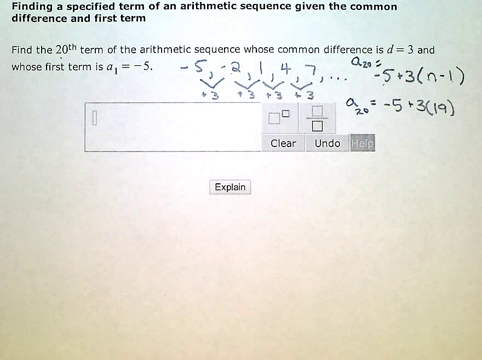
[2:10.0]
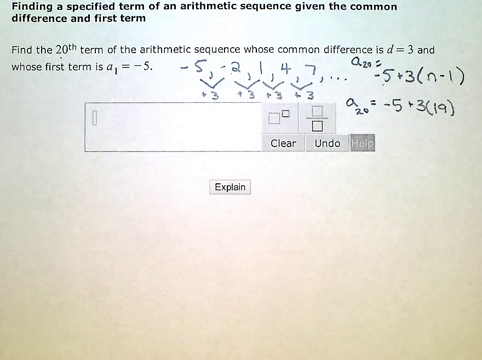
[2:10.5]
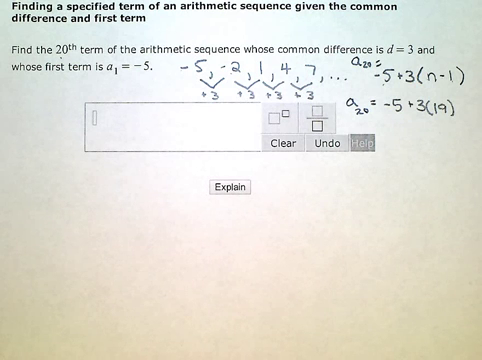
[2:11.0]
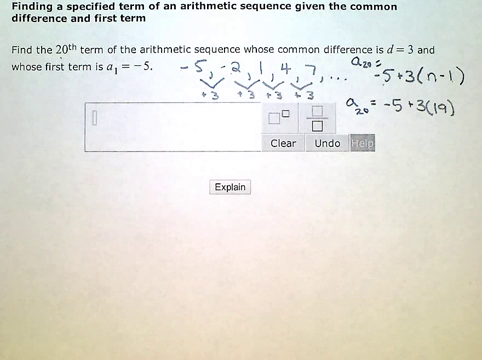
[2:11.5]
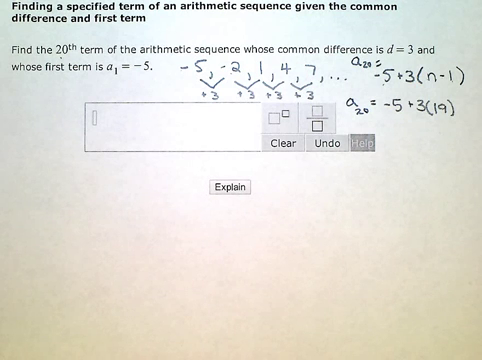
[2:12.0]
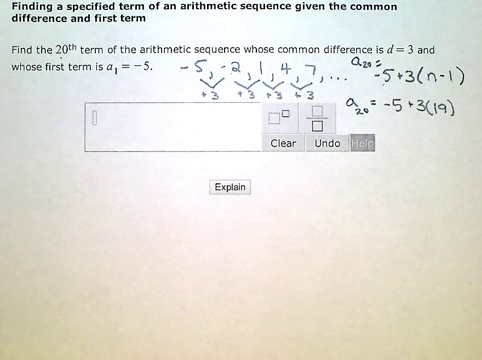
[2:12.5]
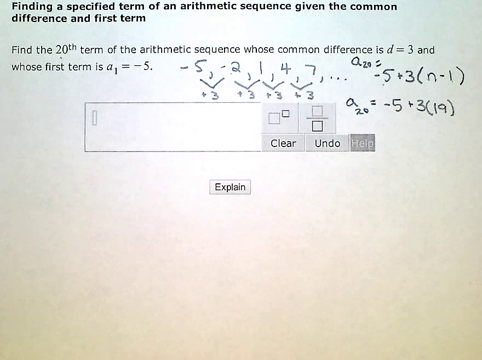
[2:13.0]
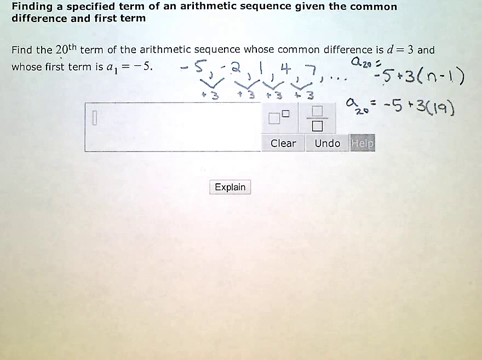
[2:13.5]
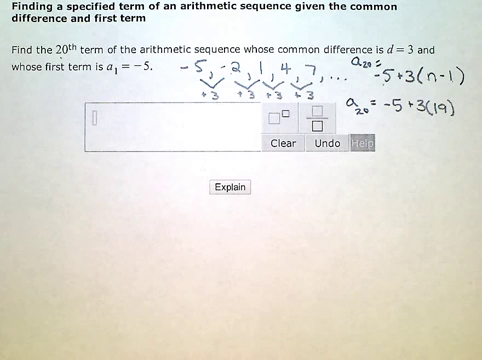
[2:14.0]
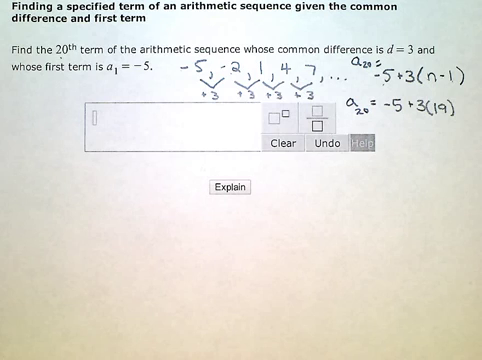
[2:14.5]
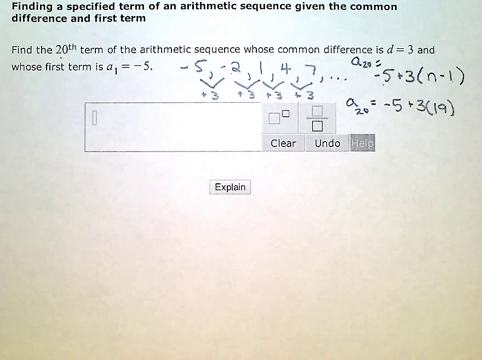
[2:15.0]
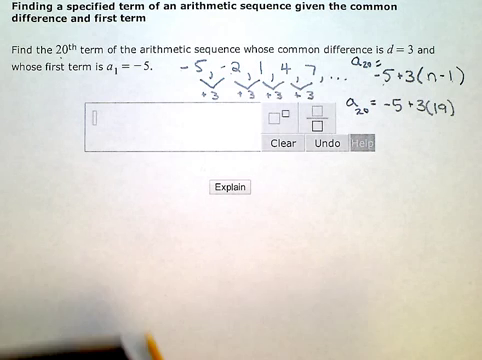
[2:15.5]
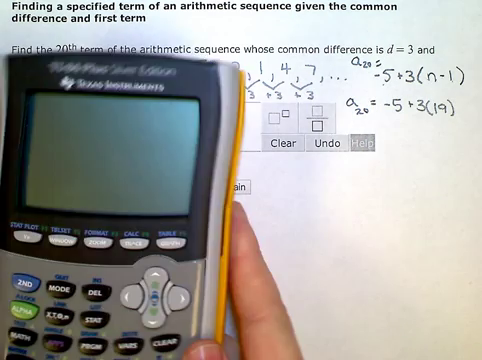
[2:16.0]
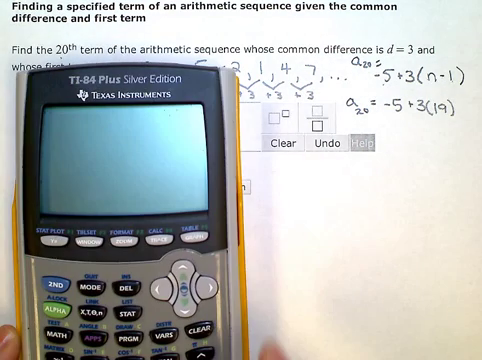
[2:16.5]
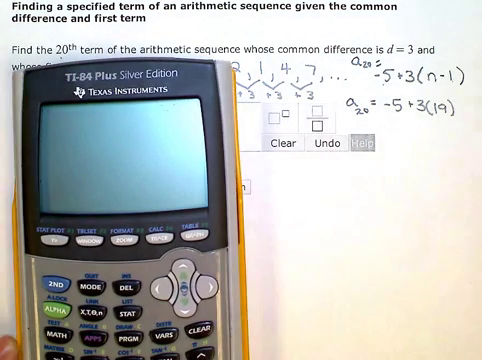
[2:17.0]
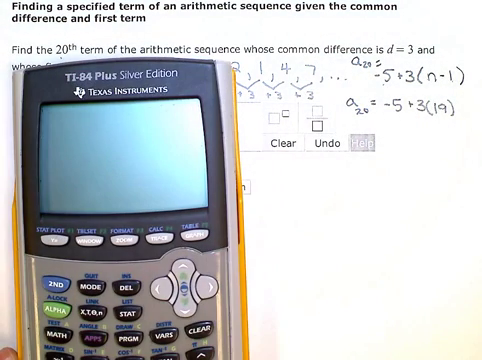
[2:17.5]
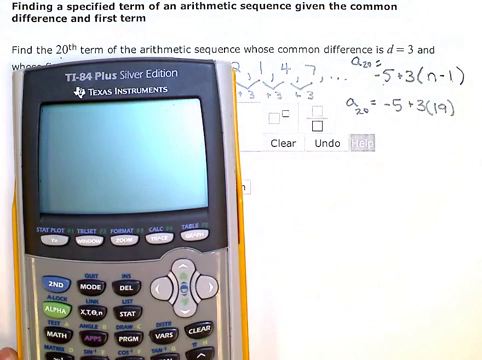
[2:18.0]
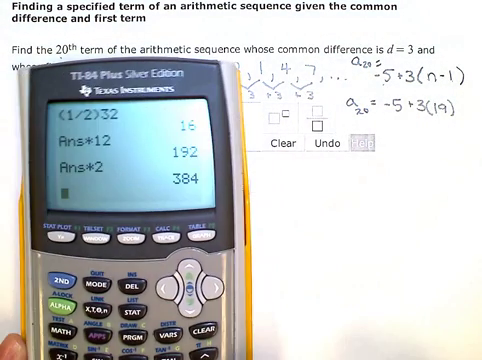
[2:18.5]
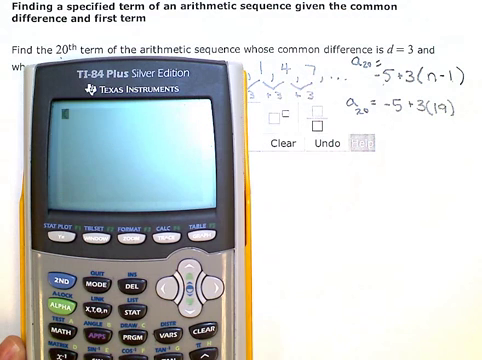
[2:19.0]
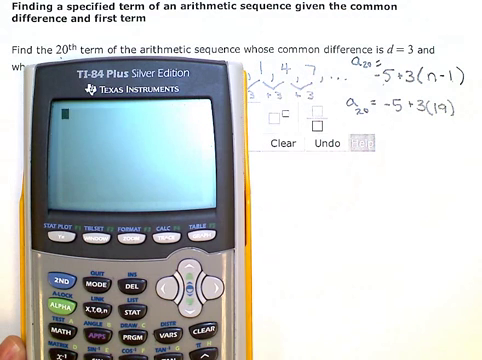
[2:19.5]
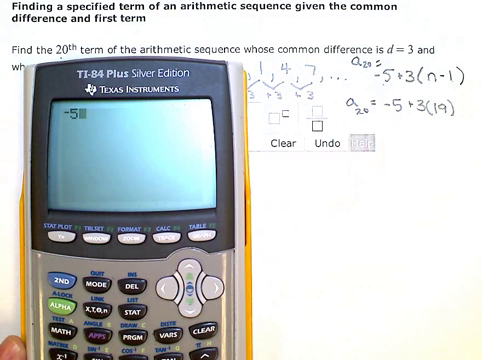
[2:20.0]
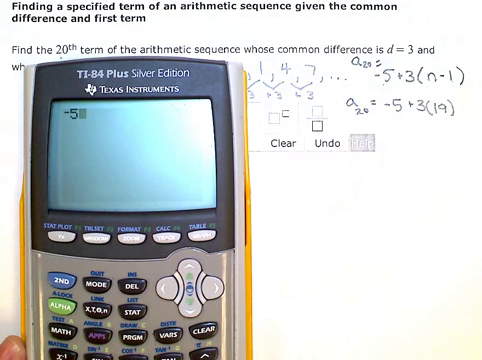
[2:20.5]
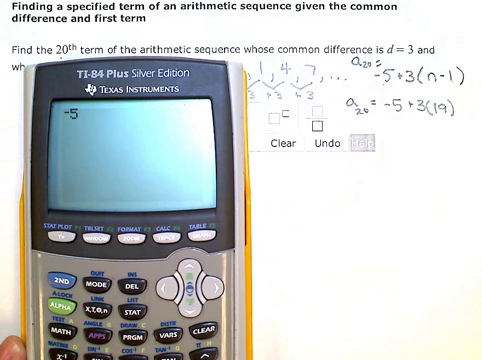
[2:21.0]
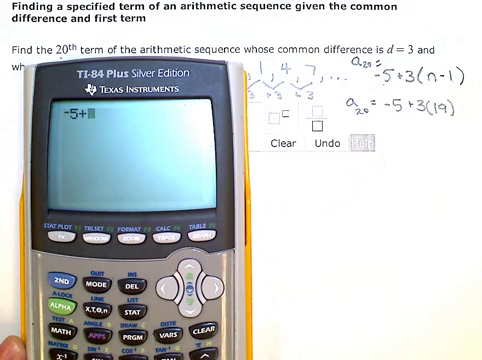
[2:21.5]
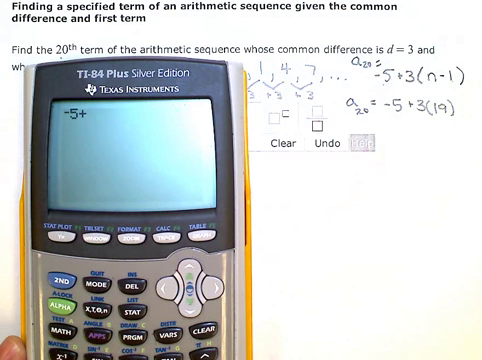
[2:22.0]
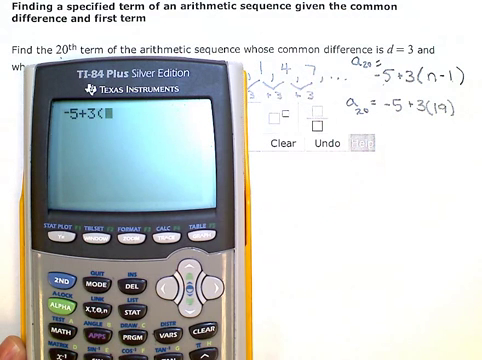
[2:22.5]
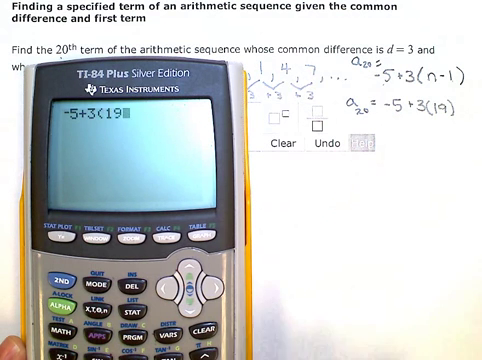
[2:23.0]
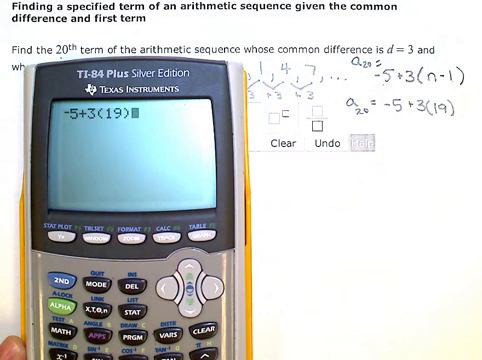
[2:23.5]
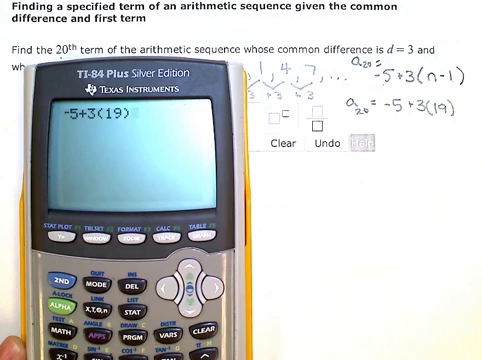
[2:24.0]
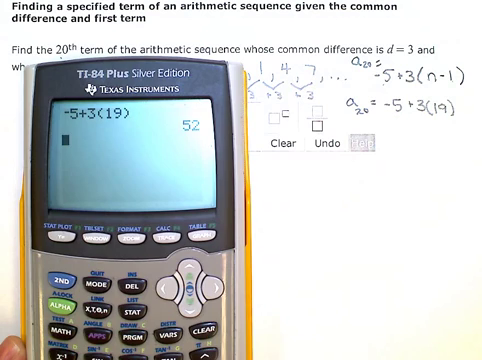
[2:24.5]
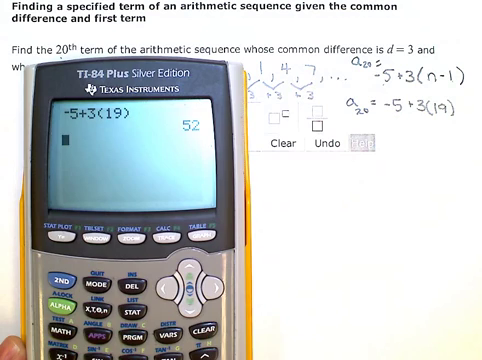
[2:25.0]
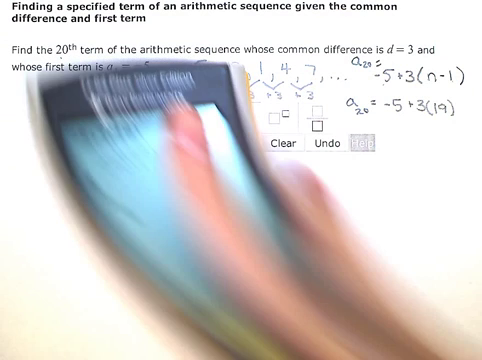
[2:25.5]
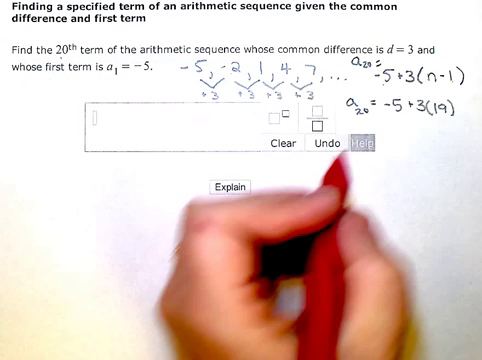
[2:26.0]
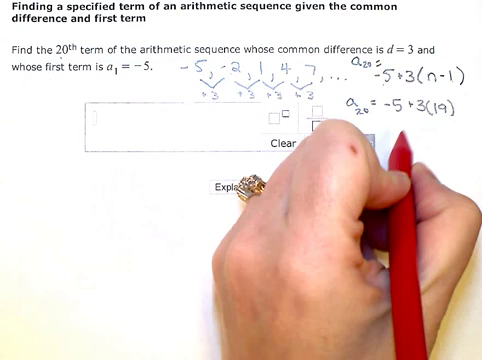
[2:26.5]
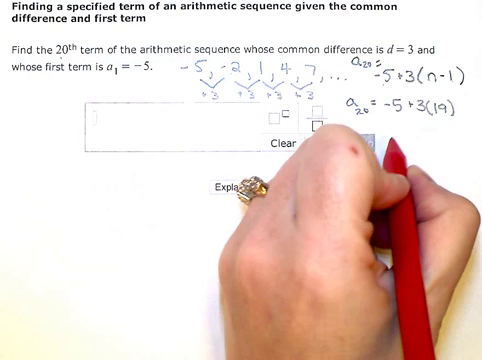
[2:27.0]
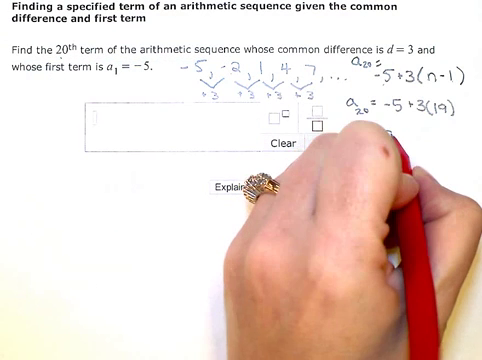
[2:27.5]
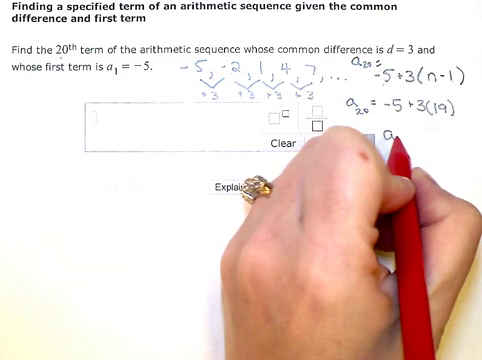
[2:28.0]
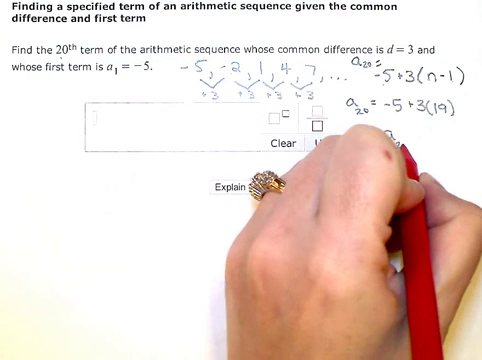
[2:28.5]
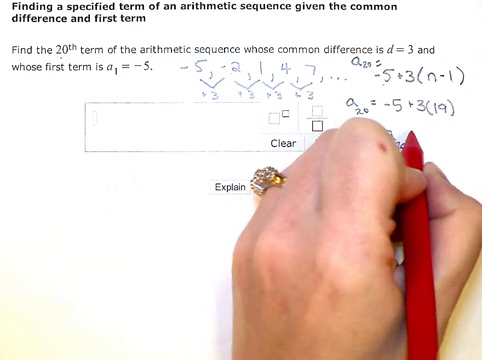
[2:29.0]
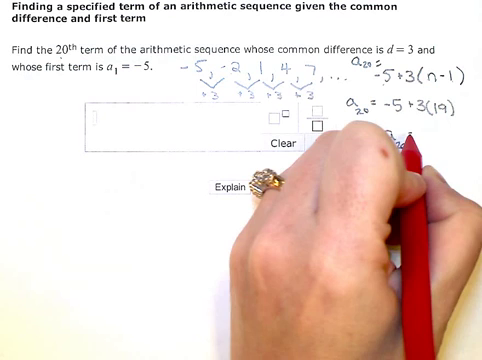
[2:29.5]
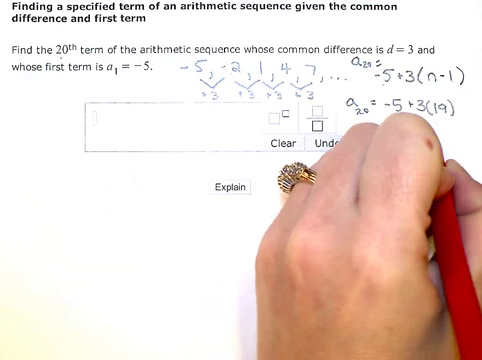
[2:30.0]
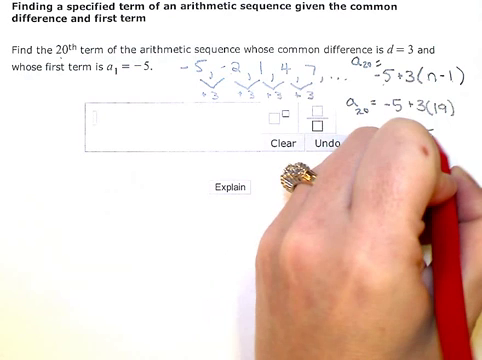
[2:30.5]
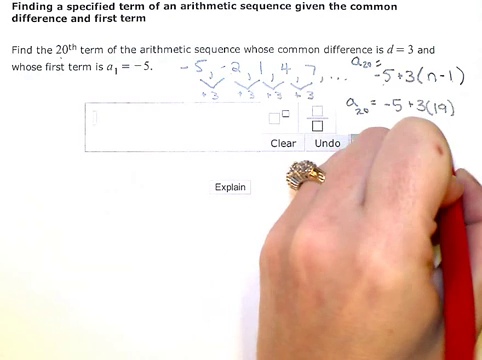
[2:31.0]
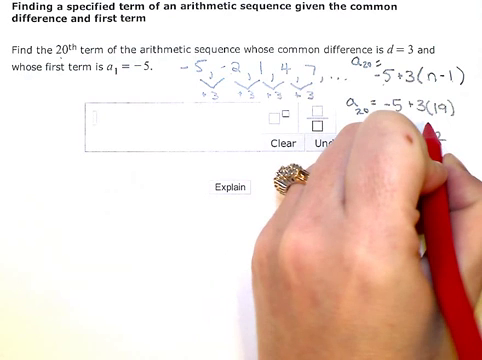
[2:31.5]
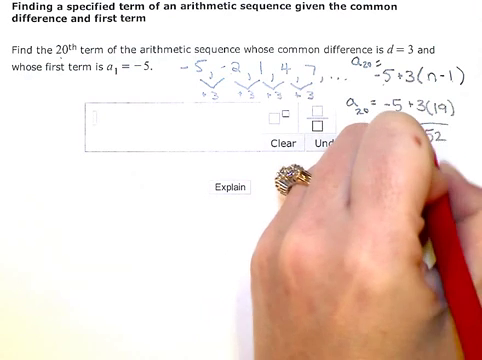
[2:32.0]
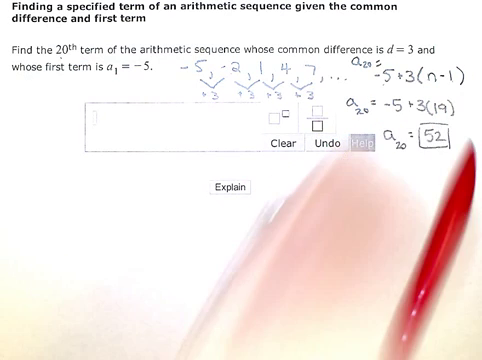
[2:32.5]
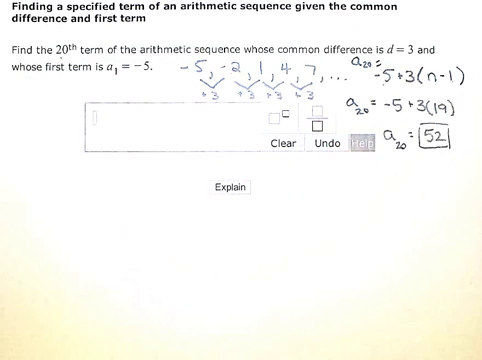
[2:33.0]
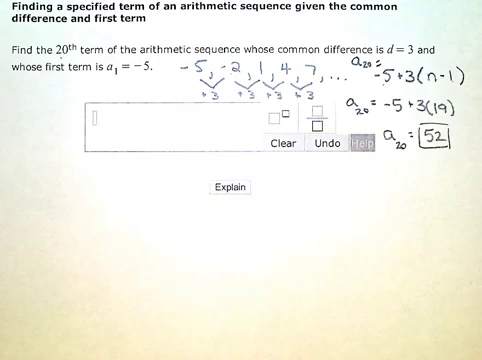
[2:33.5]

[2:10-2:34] The heading and the 20th-term question are on screen, and the page shows -5, -2, 1, 4, 7, ..., then -5 + 3 with n - 1 in parentheses, "a20 =" directly above it, and a20 = -5 + 3(19) below. A calculator appears, a T184 plus Silver Edition, apparently a scientific calculator by Texas Instruments. The person turns it on, enters -5 + 3 and (19), and it shows 52. They write a20 = 52 as the answer.